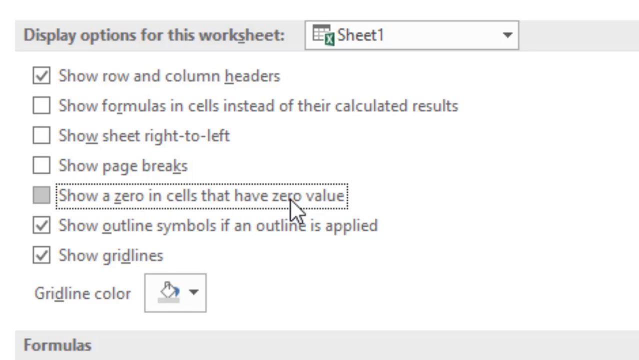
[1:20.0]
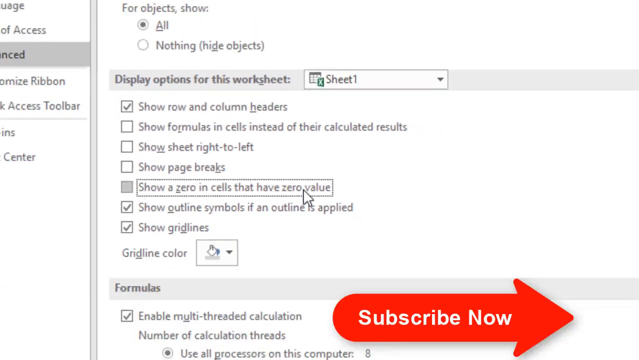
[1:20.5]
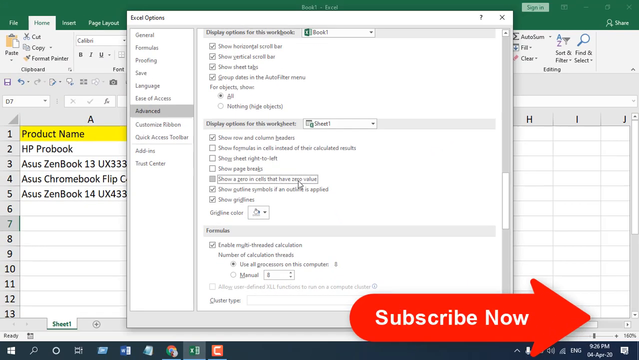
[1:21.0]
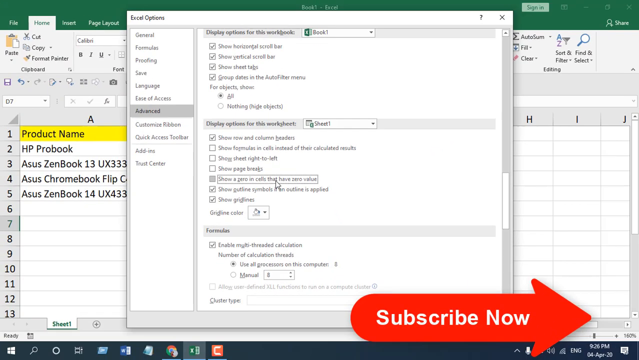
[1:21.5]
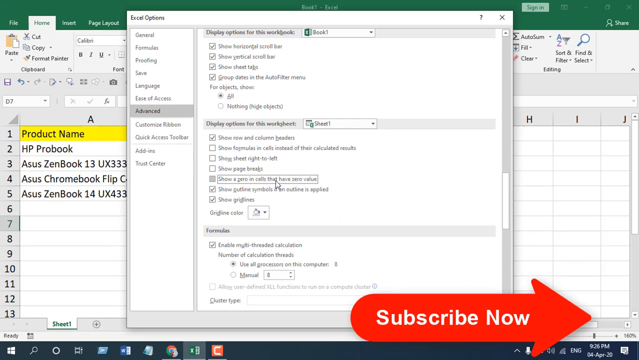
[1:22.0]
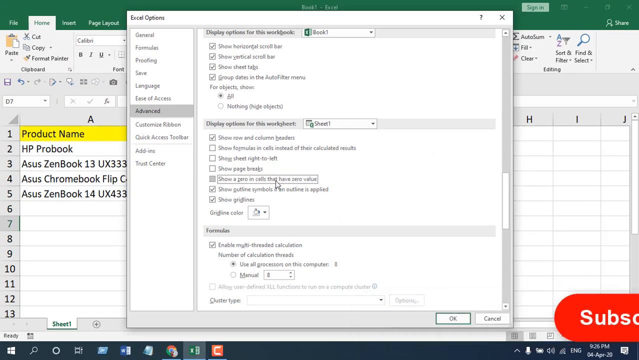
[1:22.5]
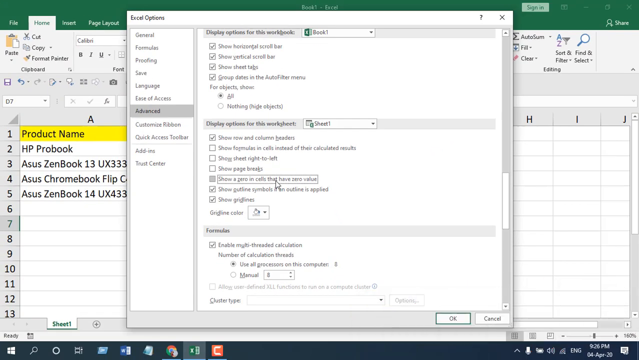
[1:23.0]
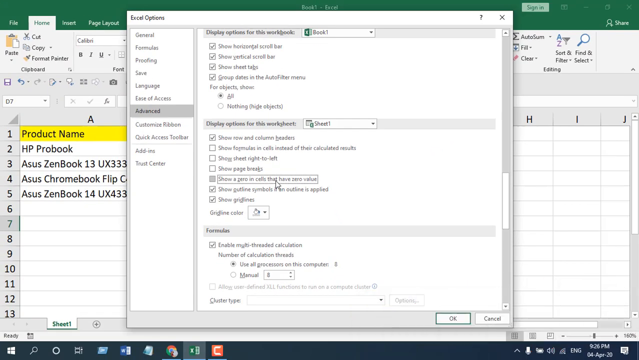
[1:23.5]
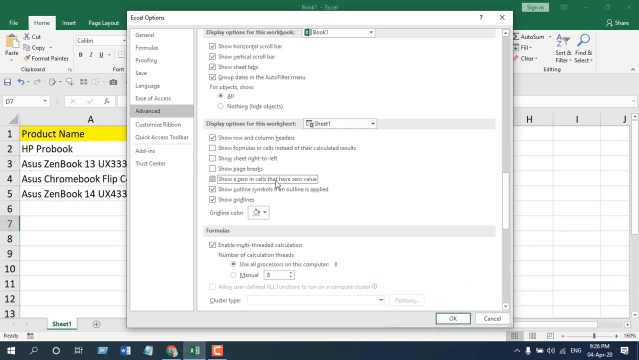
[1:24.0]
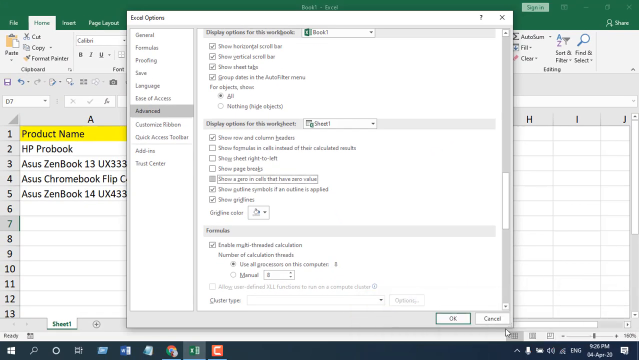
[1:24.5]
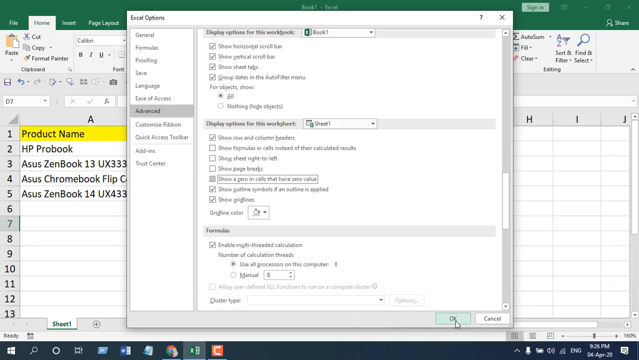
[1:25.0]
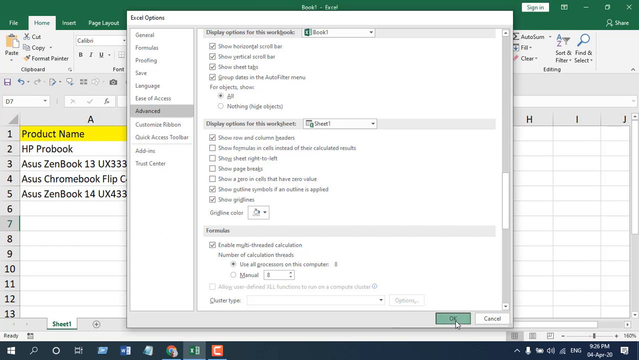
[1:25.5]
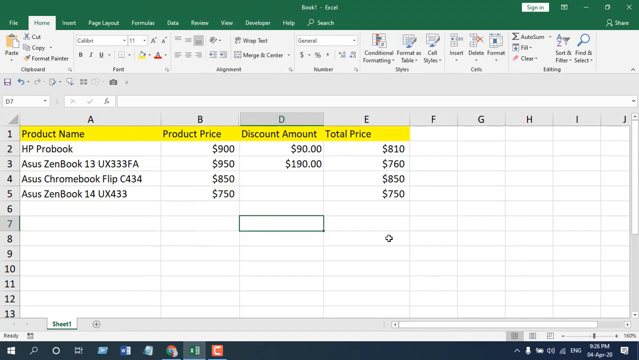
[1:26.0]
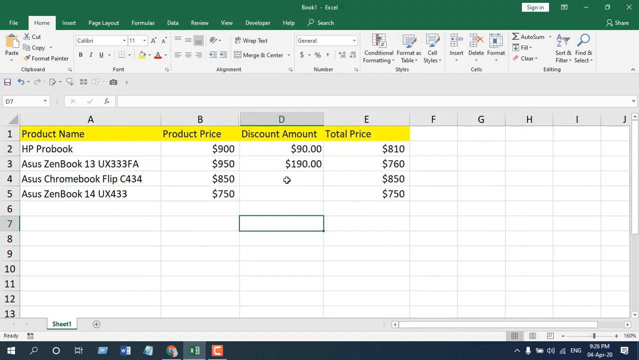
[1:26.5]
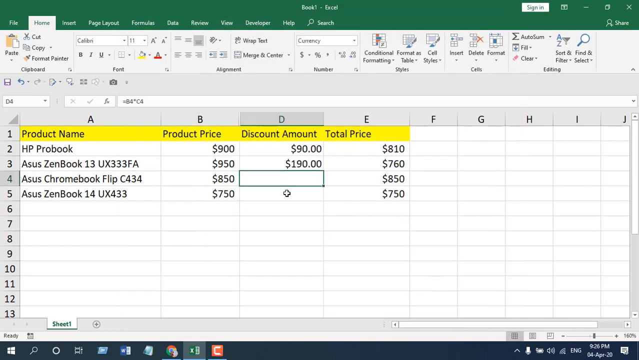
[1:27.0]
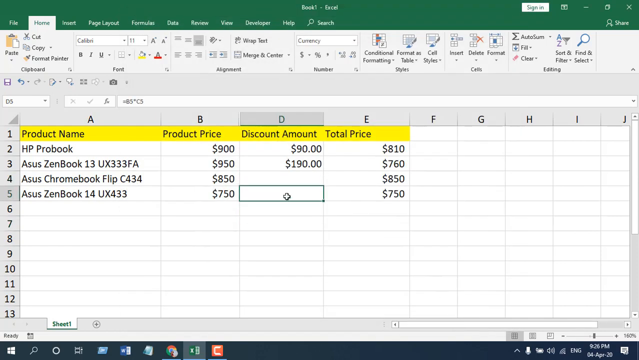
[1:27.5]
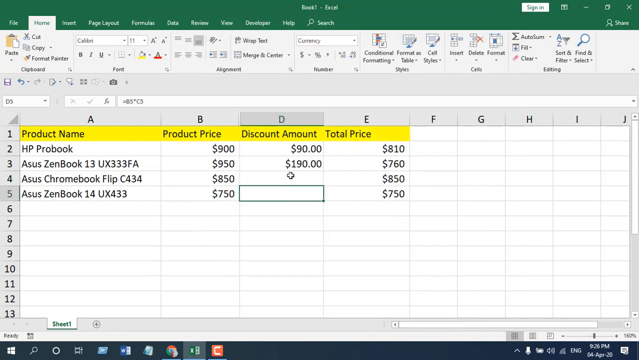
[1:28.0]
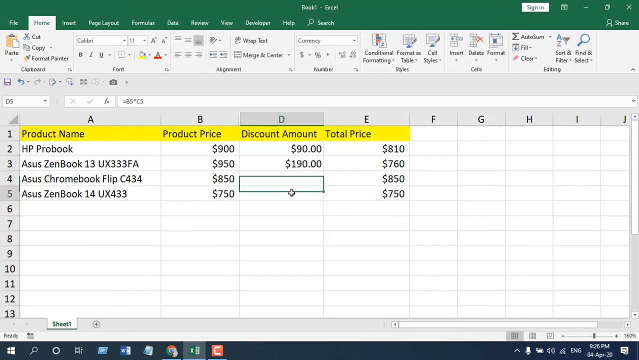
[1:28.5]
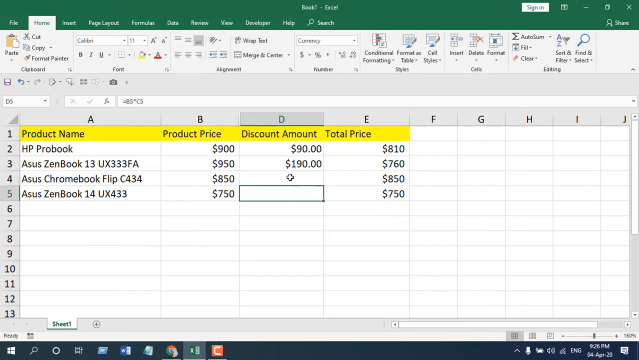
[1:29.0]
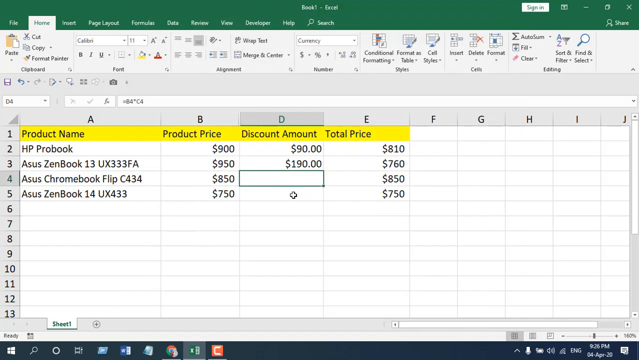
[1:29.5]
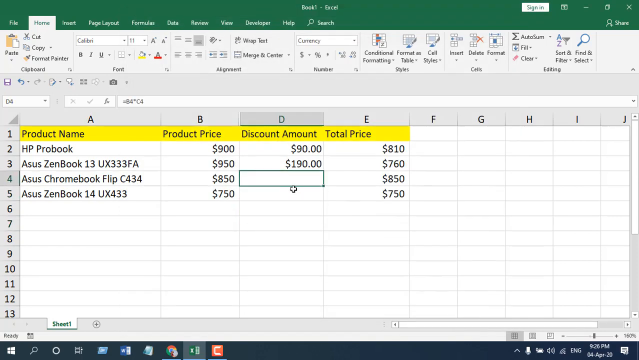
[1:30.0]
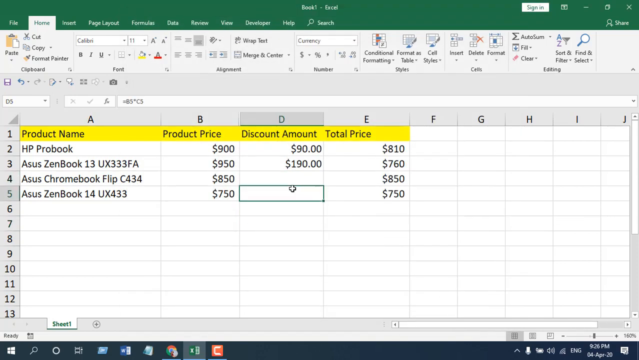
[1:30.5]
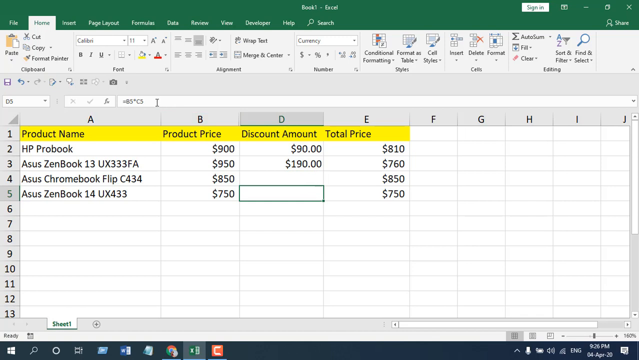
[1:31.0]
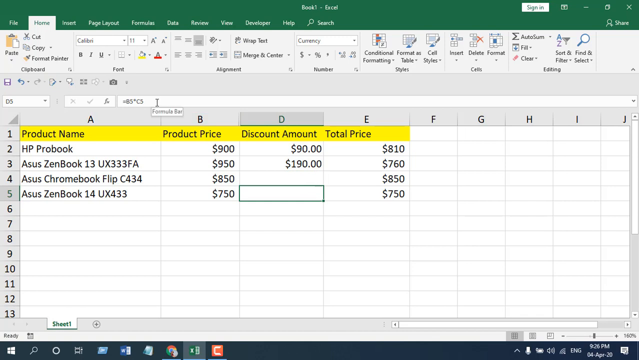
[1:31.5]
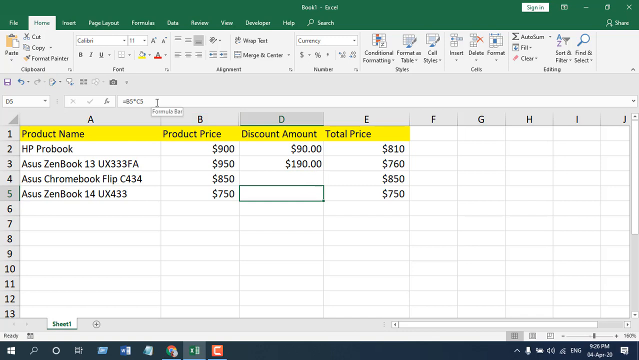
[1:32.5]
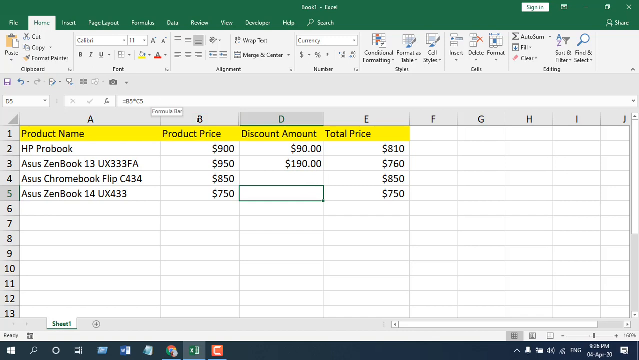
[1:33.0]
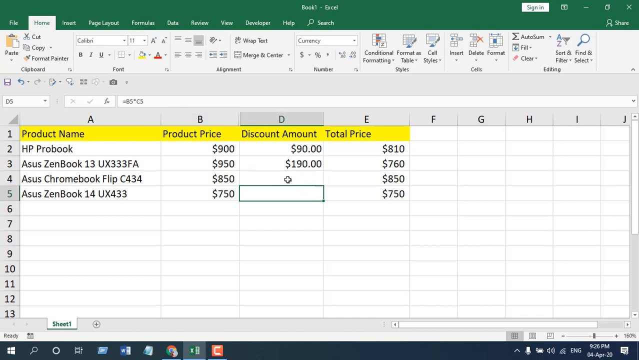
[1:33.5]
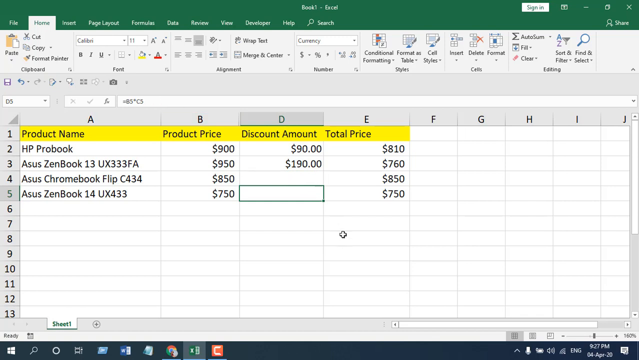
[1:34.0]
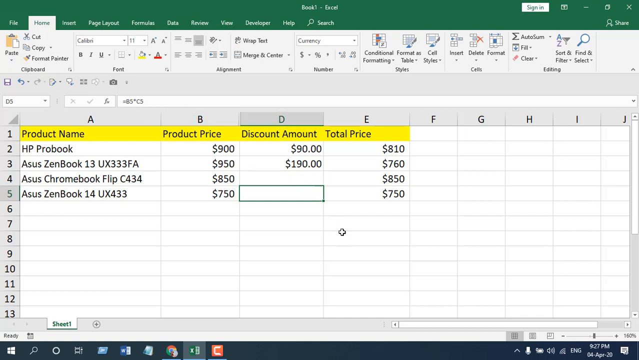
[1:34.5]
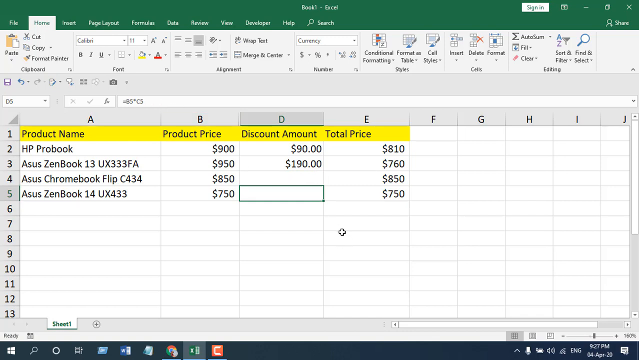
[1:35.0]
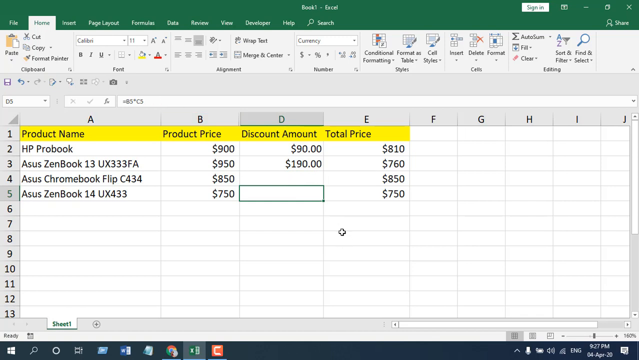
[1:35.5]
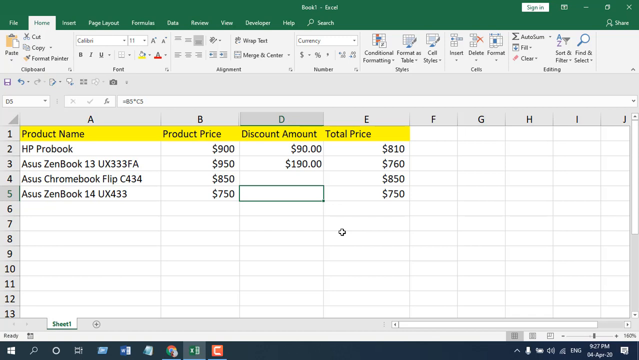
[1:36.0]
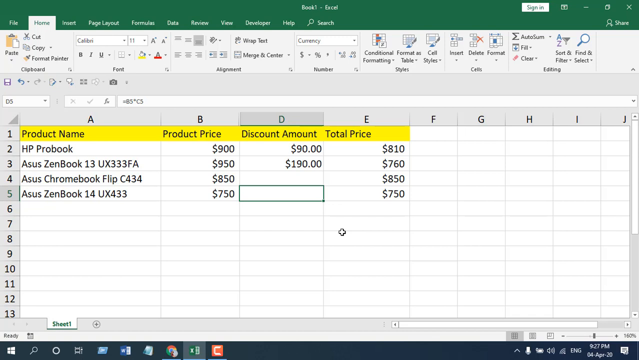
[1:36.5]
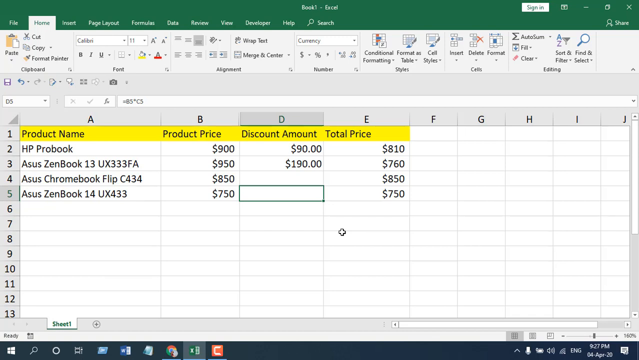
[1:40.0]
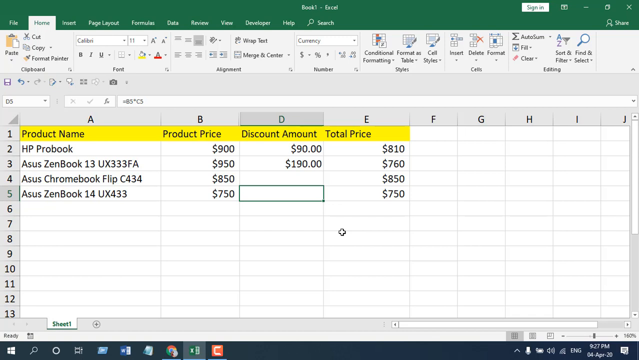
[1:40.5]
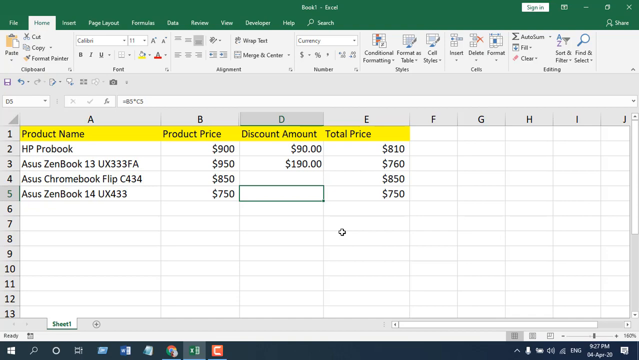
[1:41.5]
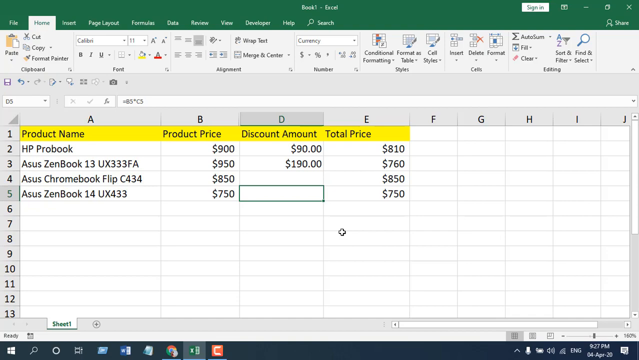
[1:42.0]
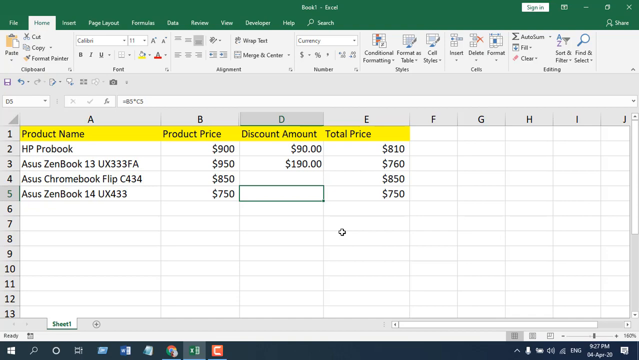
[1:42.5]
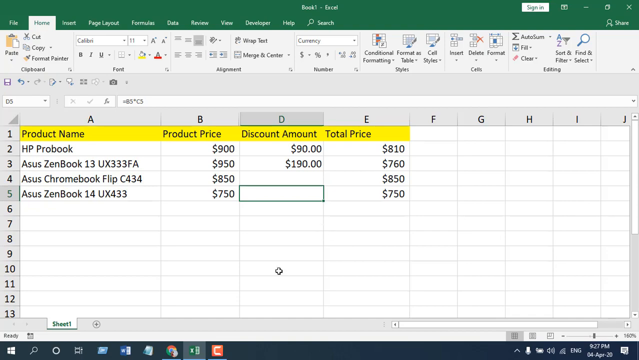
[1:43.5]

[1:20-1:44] The Advanced Options of Excel are open at the section "Display Options for this worksheet," where the box labeled "Show a zero in cells that have zero value" has just been unchecked. The camera zooms out, and a red arrow labeled "Subscribe Now" appears at the bottom right of the screen. The user clicks OK. Back in the spreadsheet, the Discount Amount column holds $90 and $190, and the two cells that held $0 now display no number at all; they are blank. The user clicks on these cells with the mouse cursor a couple of times, and the function bar at the top shows that there are values associated with these cells even though they display as blank.